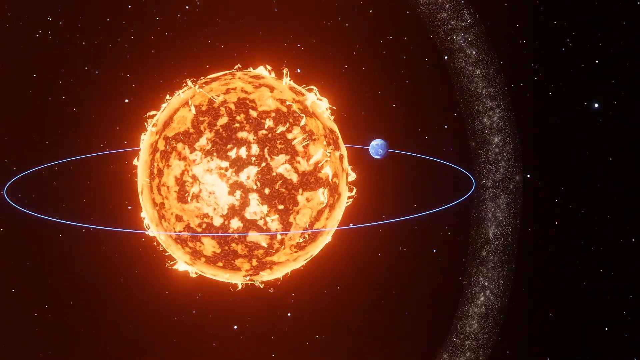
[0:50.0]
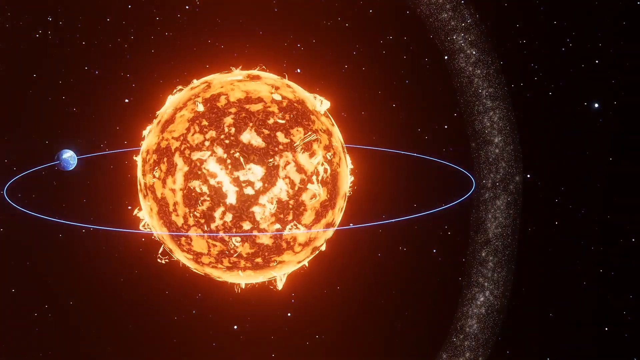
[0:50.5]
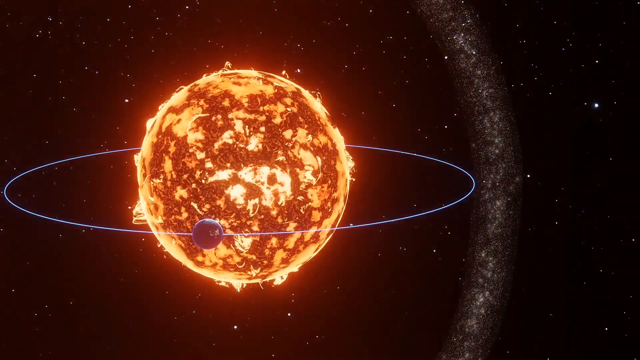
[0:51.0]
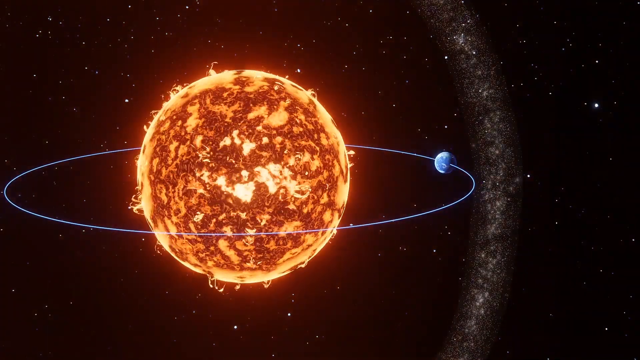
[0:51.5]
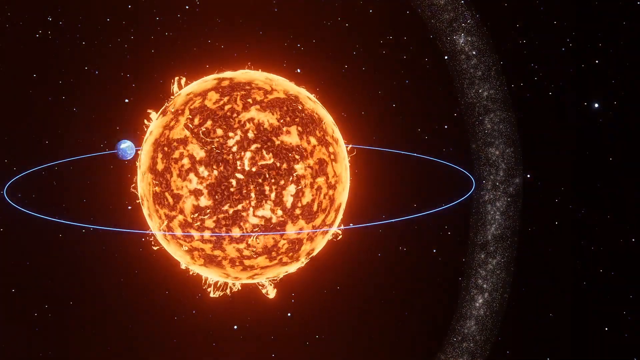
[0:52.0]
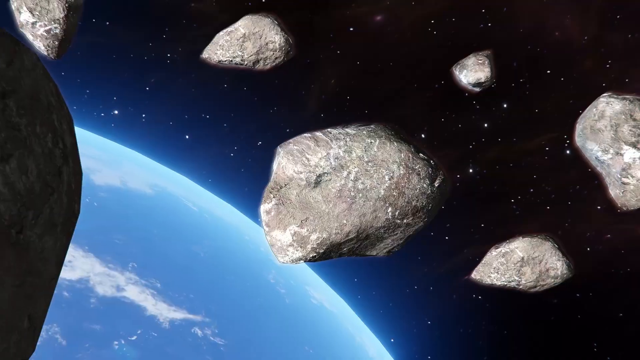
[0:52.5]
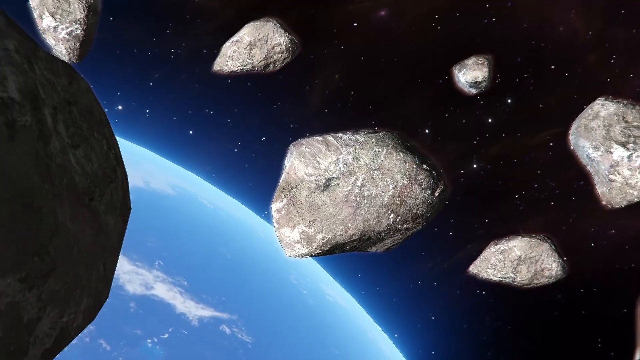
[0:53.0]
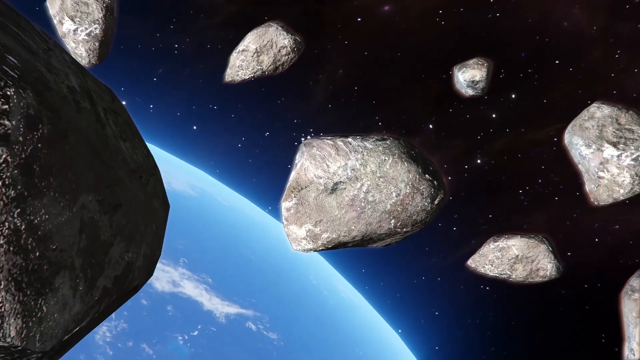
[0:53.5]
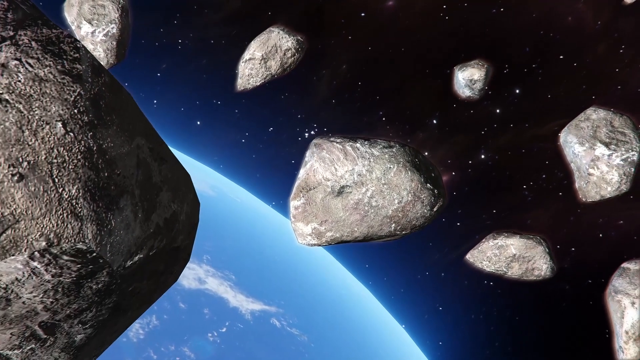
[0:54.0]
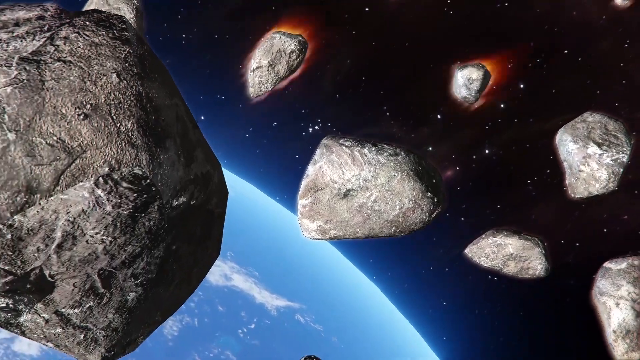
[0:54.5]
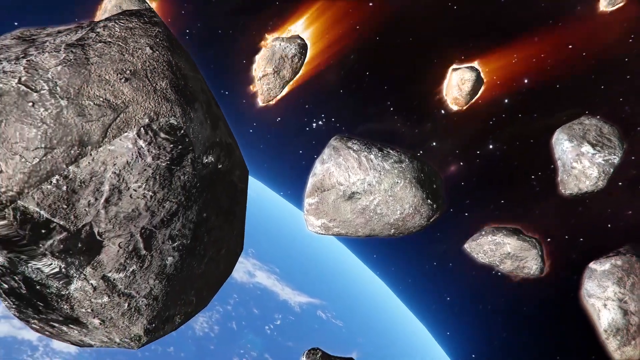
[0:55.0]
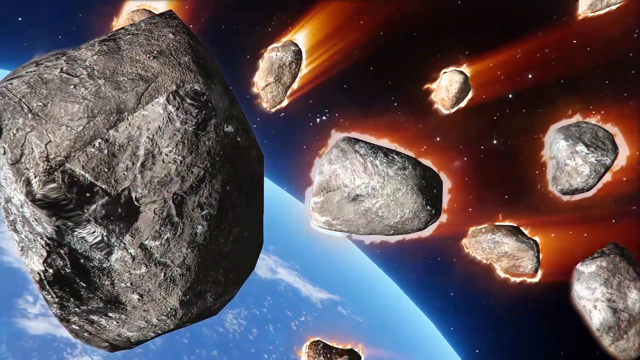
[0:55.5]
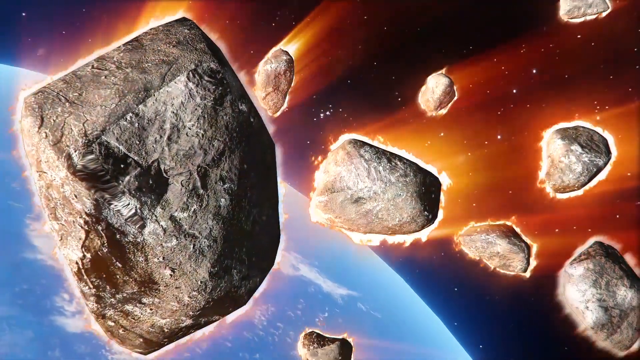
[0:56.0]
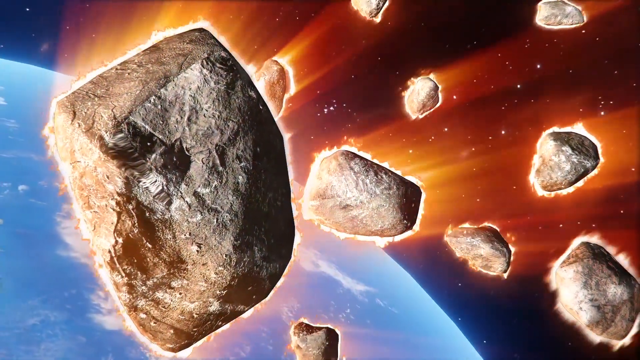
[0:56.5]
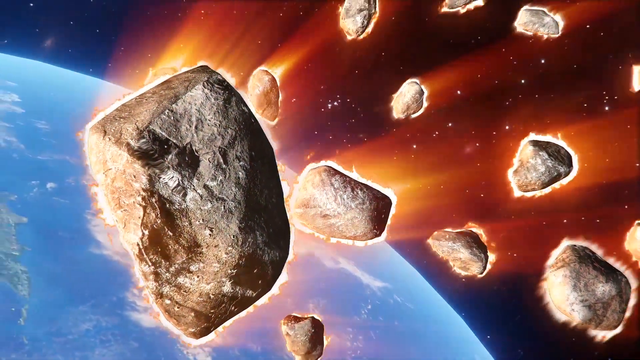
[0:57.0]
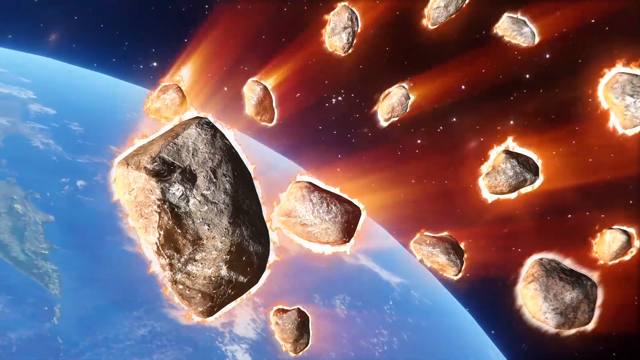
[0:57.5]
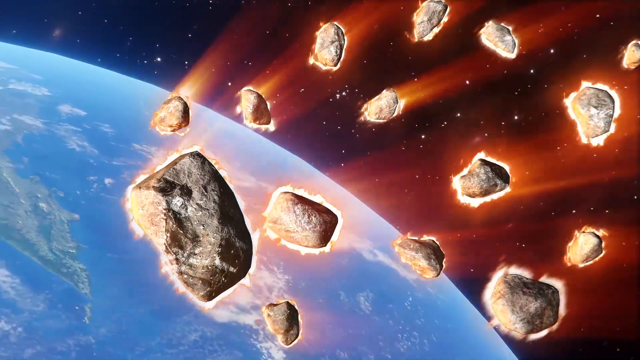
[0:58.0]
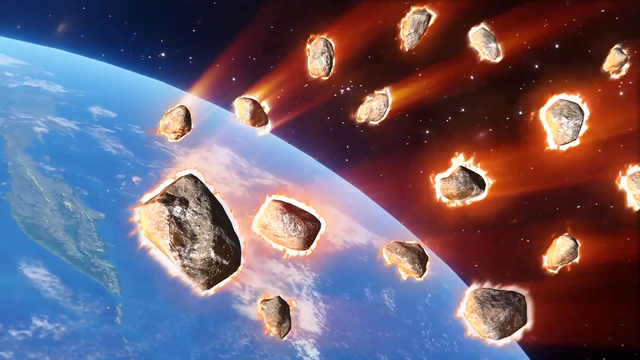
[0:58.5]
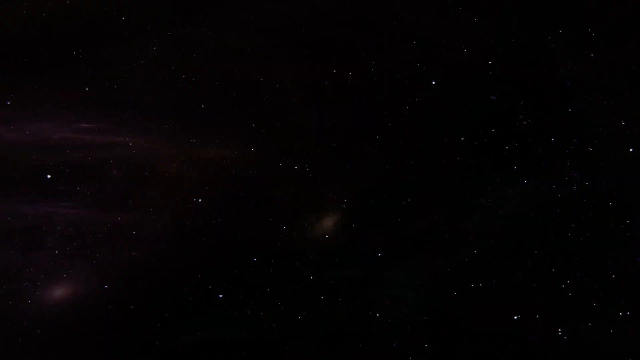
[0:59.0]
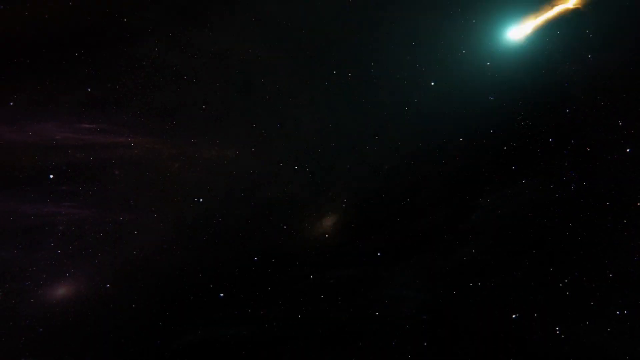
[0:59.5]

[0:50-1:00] Multiple objects, apparently asteroids, head toward Earth, at least 10 to 12 of them. They come into the atmosphere and start to burn up as they make their initial entry, and they are shown streaking downward.